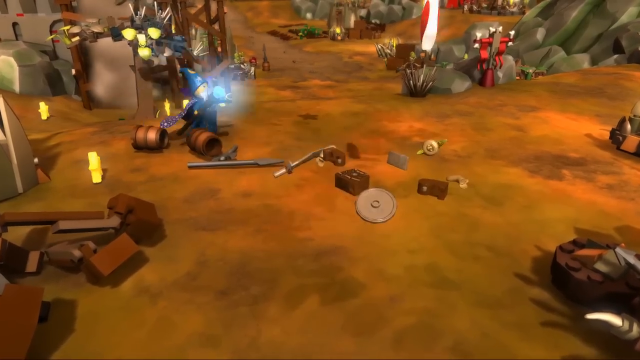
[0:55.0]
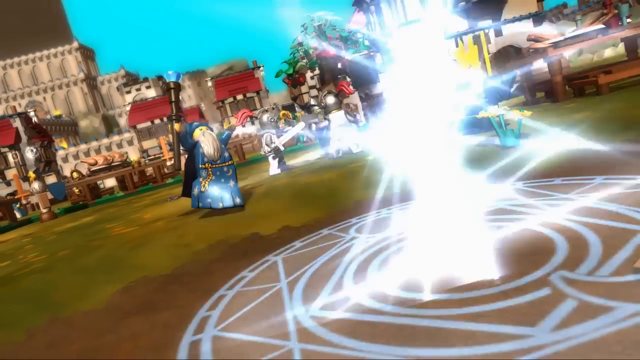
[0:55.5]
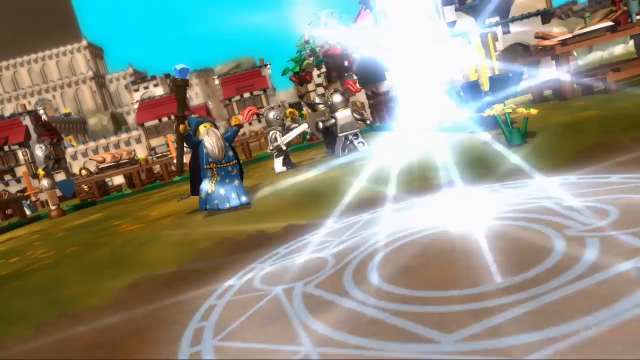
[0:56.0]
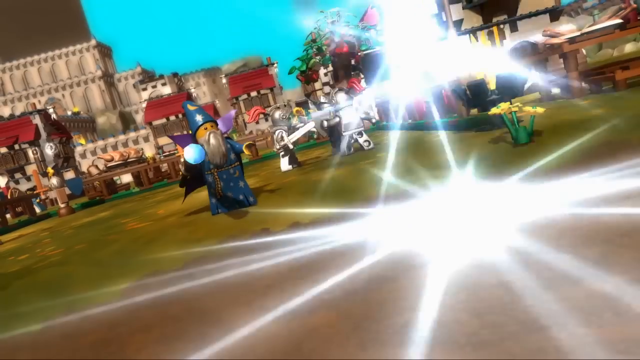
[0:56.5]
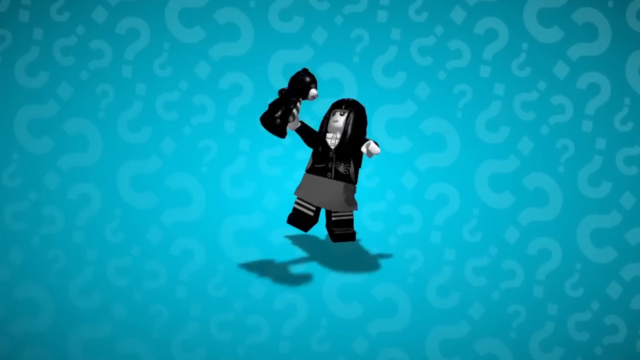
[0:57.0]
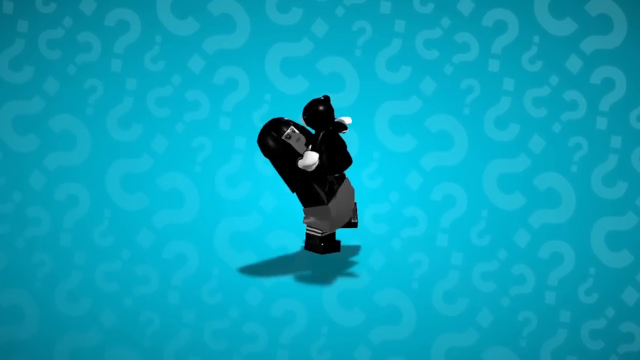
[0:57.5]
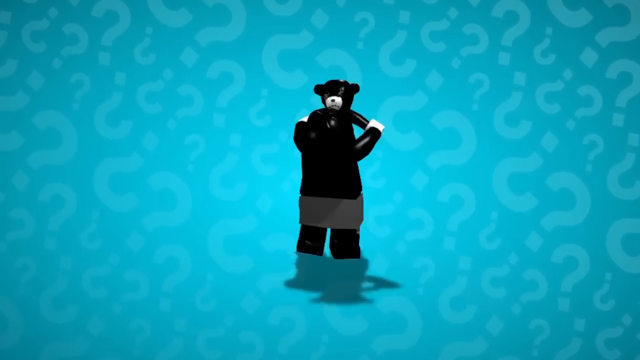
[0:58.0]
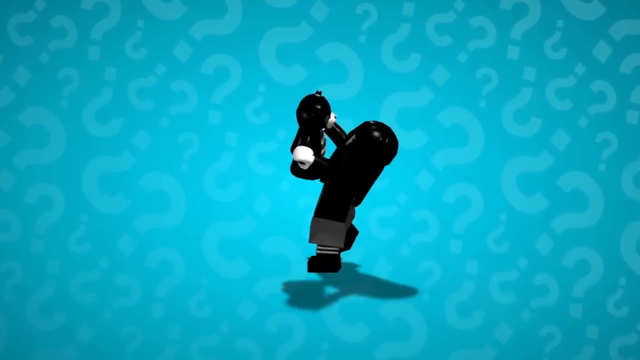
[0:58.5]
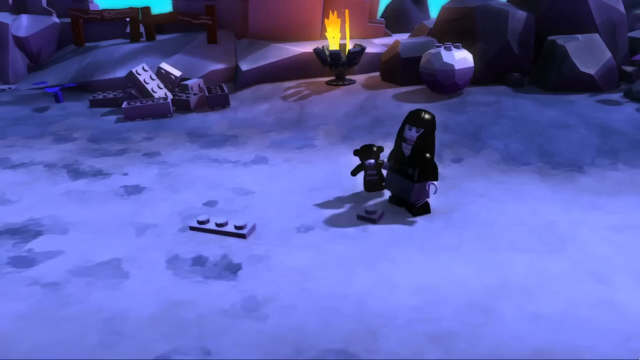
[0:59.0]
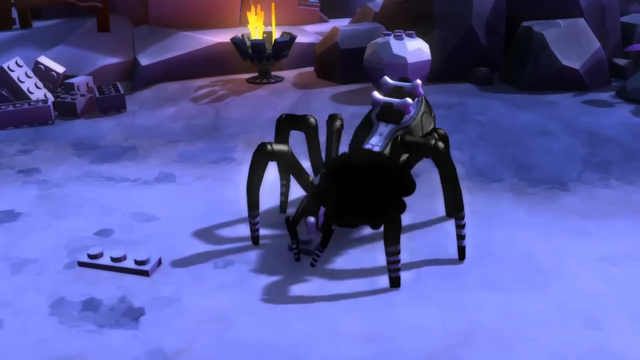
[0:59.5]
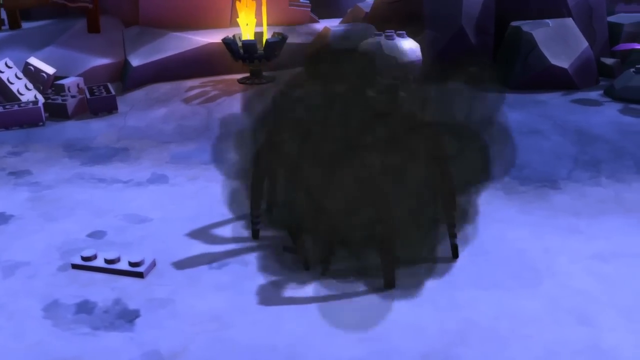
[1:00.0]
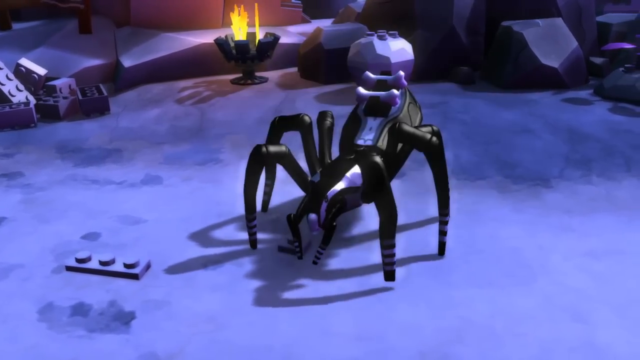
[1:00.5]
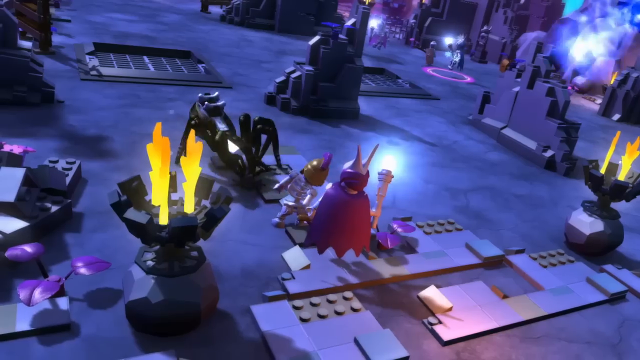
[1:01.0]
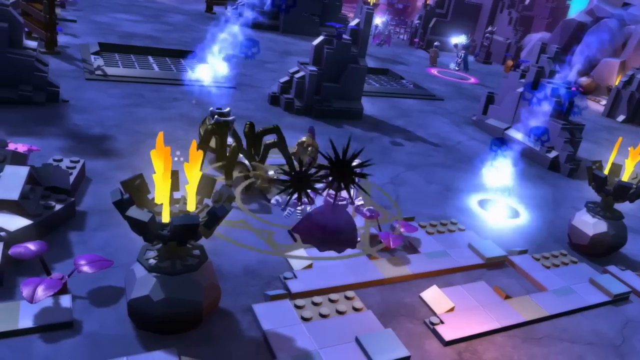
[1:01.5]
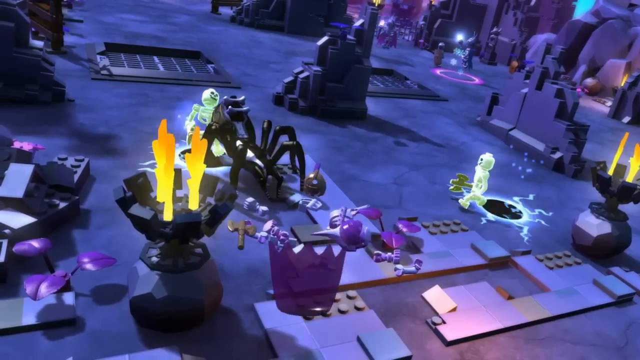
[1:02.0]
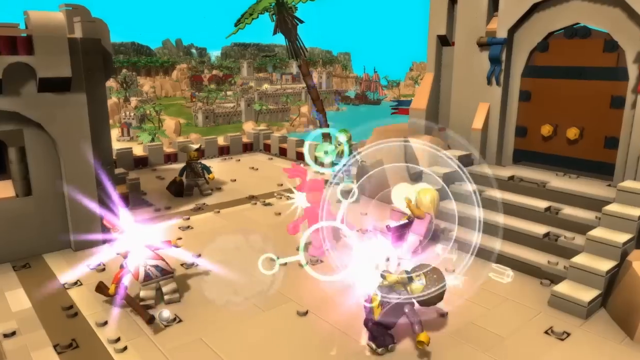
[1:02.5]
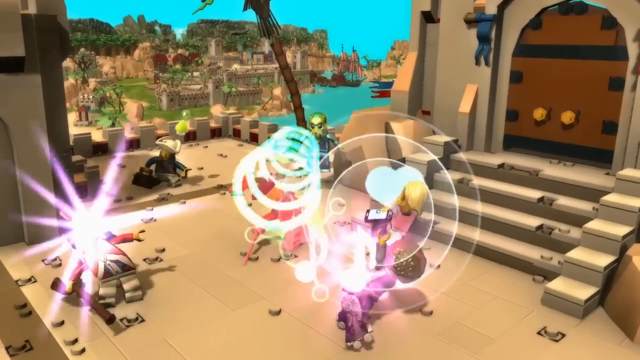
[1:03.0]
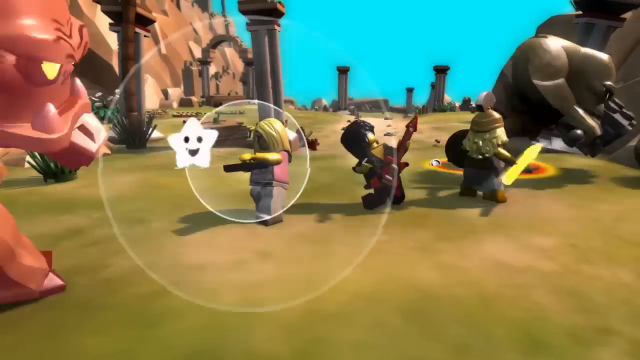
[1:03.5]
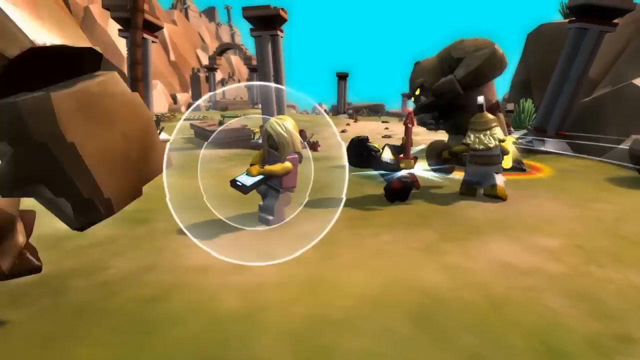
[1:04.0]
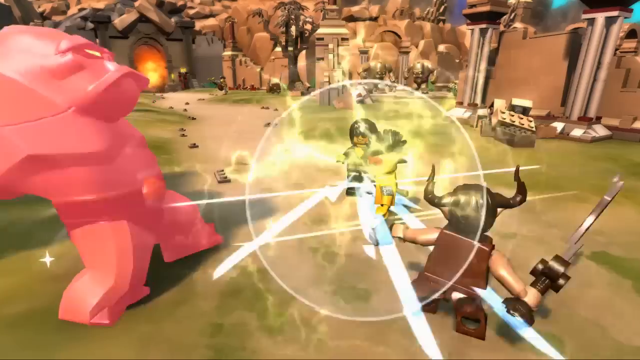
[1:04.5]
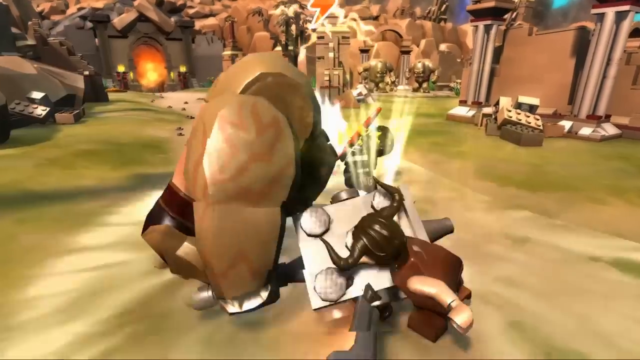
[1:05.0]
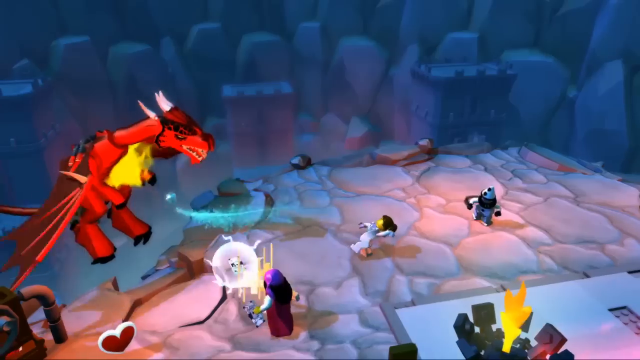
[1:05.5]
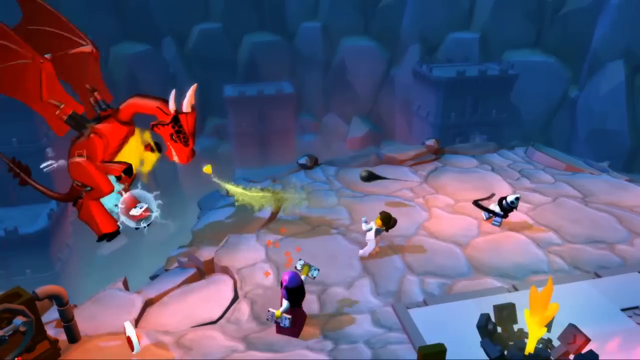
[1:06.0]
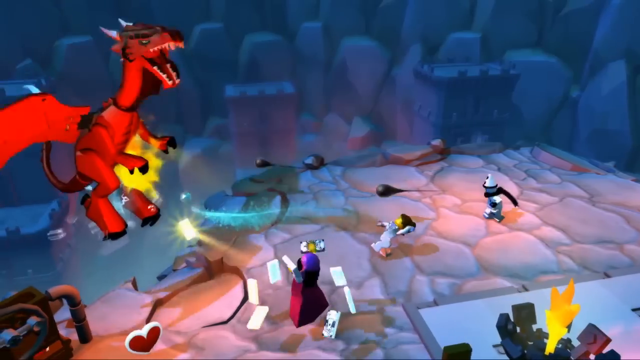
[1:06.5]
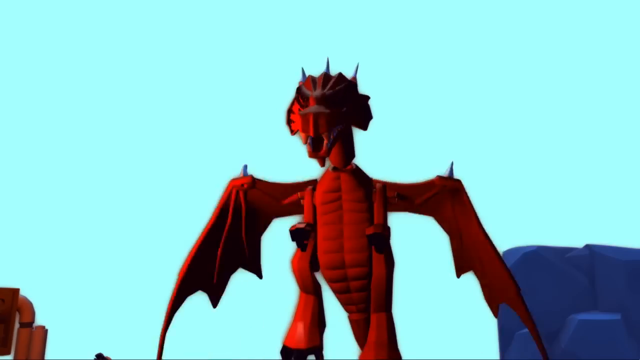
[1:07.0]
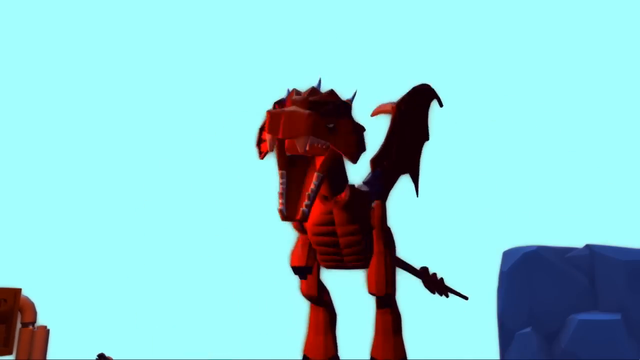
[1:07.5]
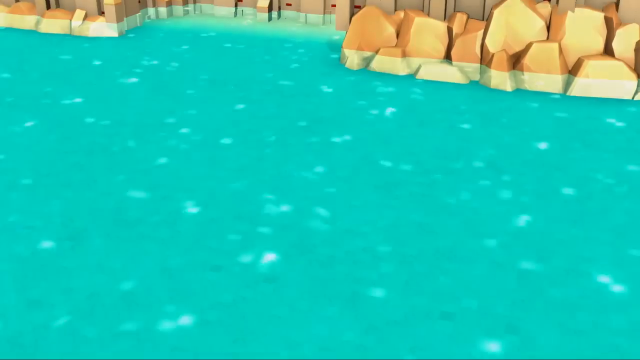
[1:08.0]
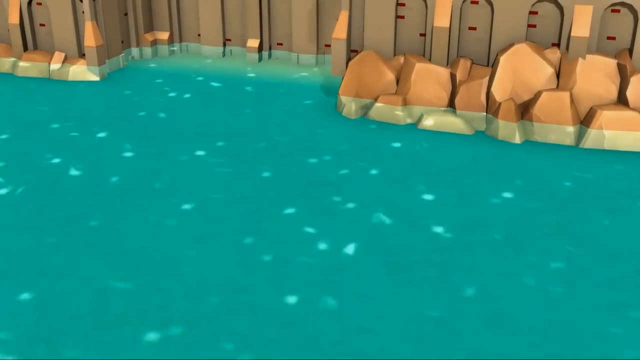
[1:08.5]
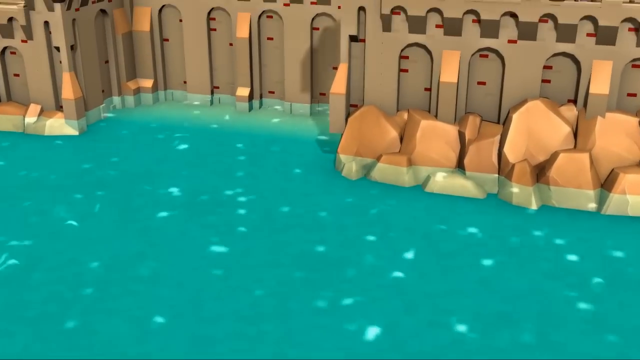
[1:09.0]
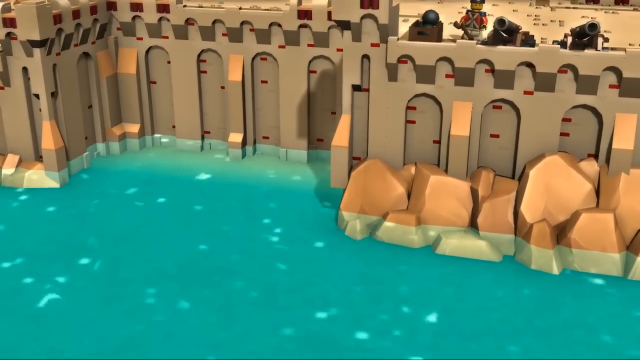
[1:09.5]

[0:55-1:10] The wizard appears in another setting that looks to be more of a normal city, with green grass, a turquoise sky, and many buildings and people in the background. He uses his staff to create large rays of light. On the turquoise screen, a goth female LEGO figure with black hair, very white skin, black shoes and a totally black outfit holds a black teddy bear and walks in circles with it. In a purple setting she holds the bear for one second and then immediately transforms into a large spider, seemingly using her spider powers to ward off enemies. A different setting shows some sort of island where many people emit various shapes and rays of light to defeat enemies. In another setting, three LEGO people throw and shoot things at a large red dragon on stony ground. The red dragon blows fire toward the camera, and then a shot shows the island with lots of ocean and a tan building.